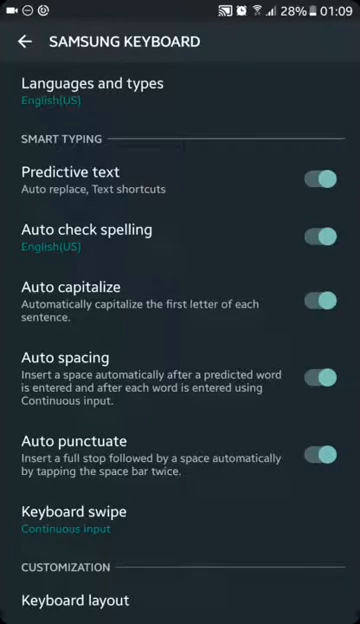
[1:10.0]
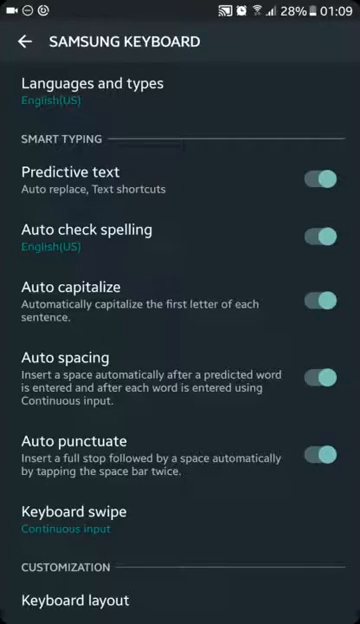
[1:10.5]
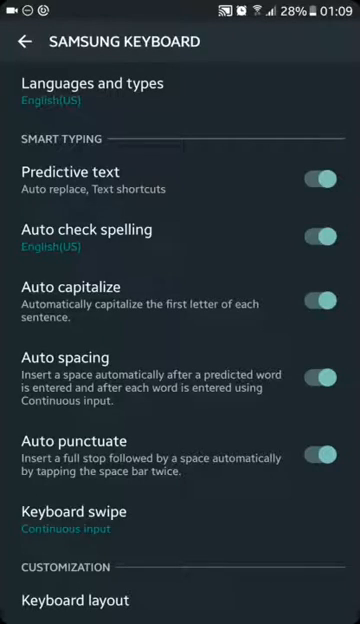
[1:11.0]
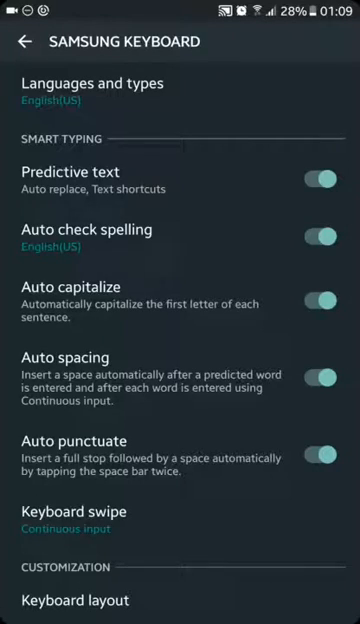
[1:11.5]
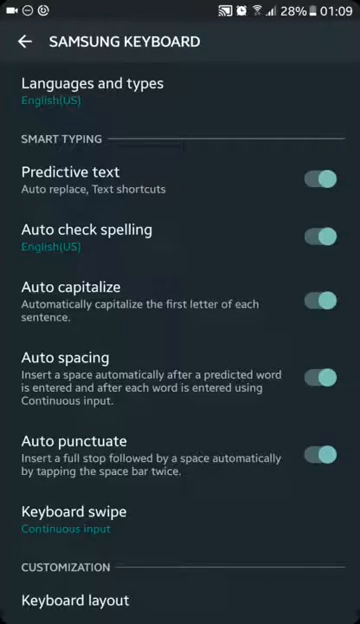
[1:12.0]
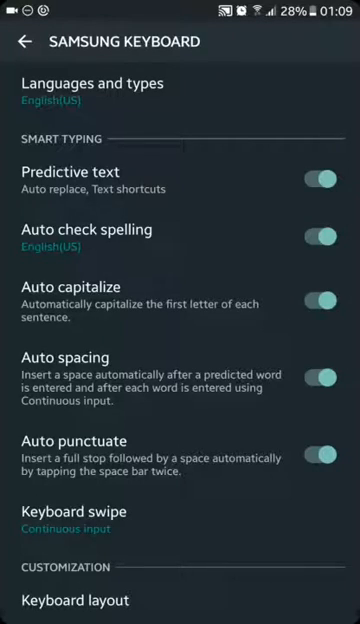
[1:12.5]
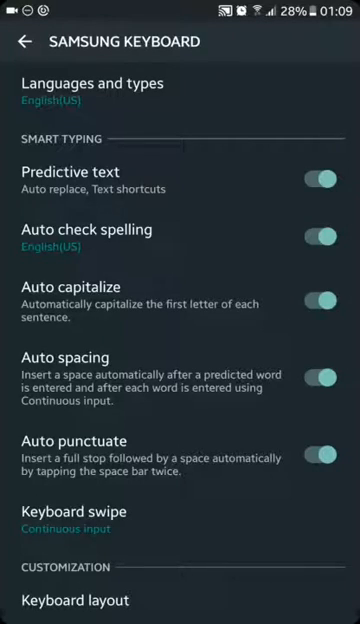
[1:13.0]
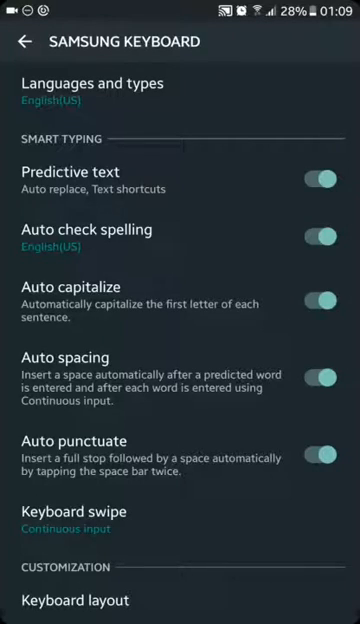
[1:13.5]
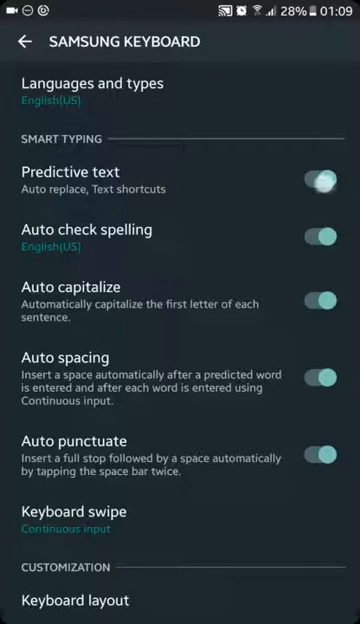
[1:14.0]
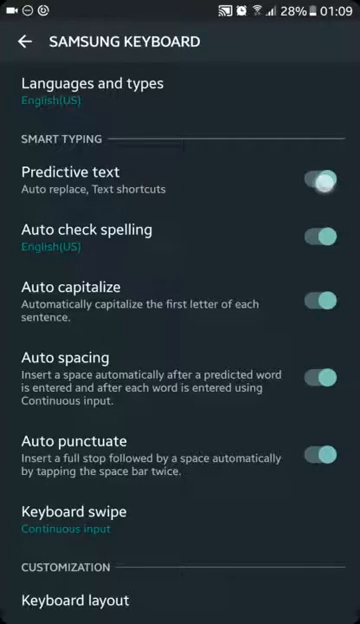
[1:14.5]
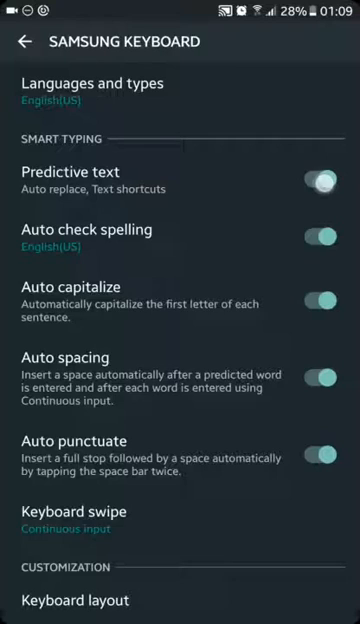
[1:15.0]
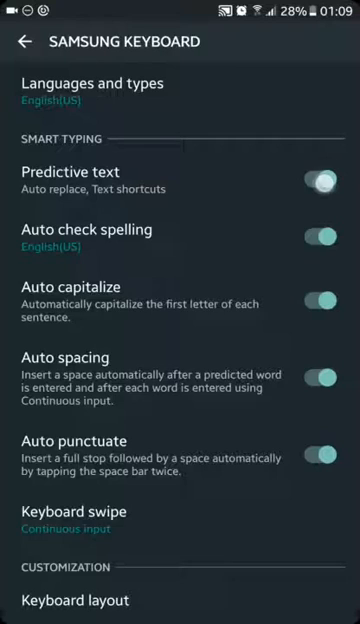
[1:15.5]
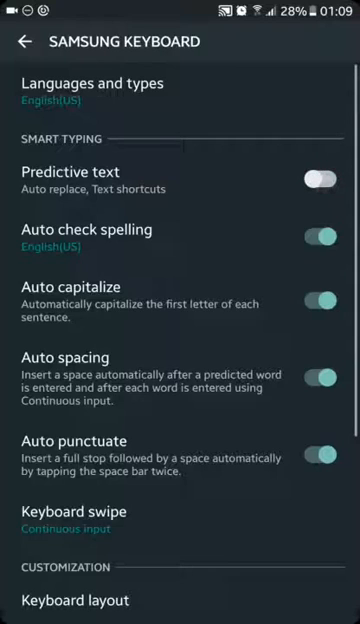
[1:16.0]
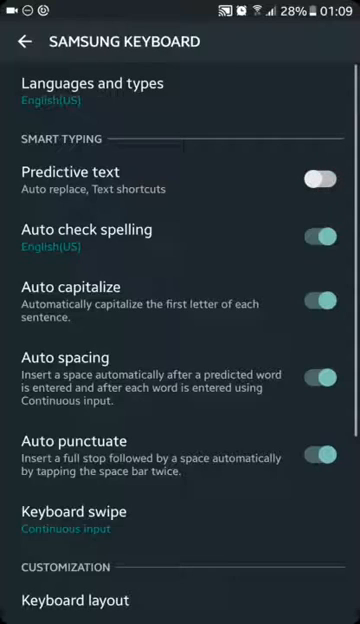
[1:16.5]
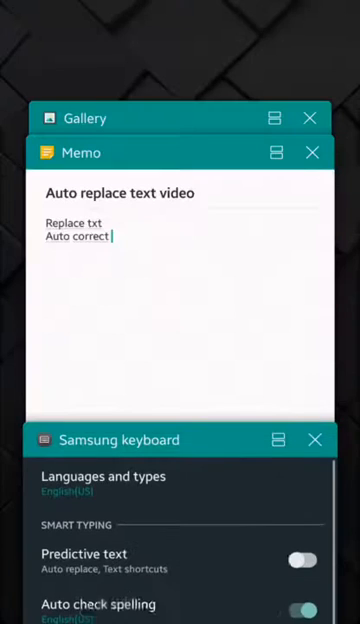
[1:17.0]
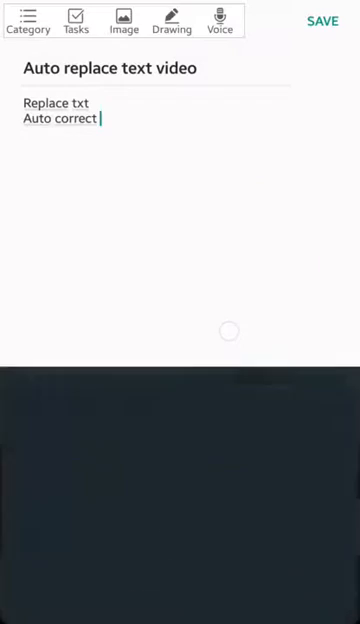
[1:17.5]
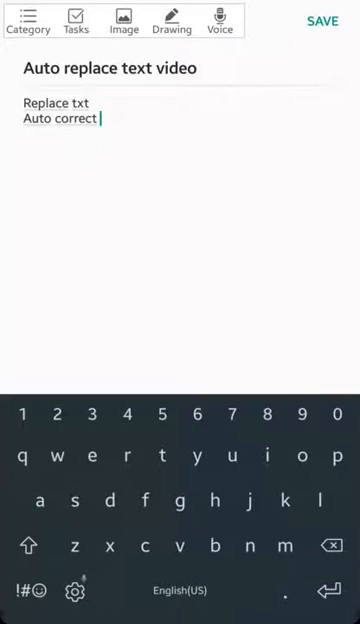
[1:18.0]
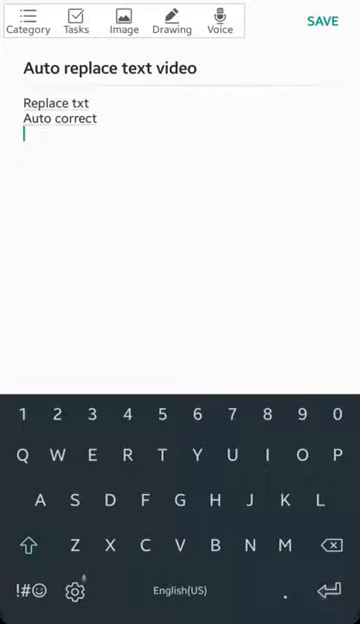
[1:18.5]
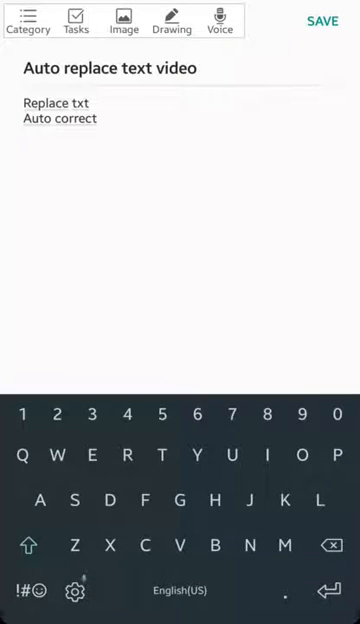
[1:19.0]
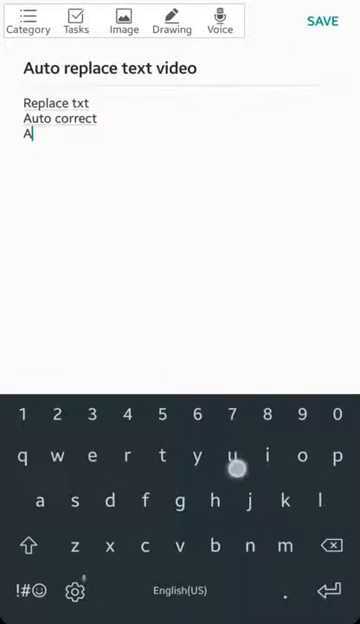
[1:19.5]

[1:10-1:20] A cell phone settings screen is titled "Samsung Keyboard." Below it are the categories "Languages and Types," "Predictive Text," "Auto-Check Spelling," "Auto-Capitalize," "Auto-Spacing," "Auto-Punctuate," and "Keyboard Swipe." The first five categories have toggle buttons, all swiped to the right and looking activated. Below them is "Customization." The screen then changes back to the memo screen, which shows "Auto-Replace Text Video" and "Replace Text," with "Auto-Correct" typed into the field. The screen expands, with the phone keyboard below, and the user looks like they type something before the video moves on.